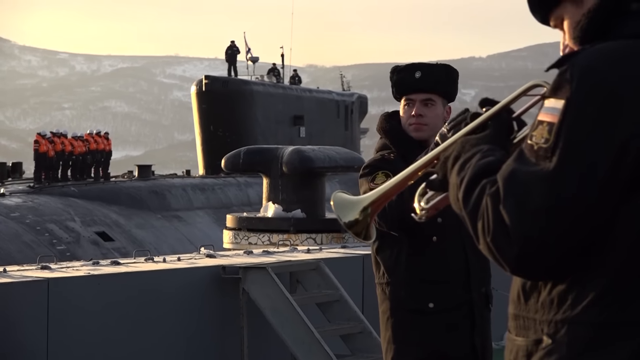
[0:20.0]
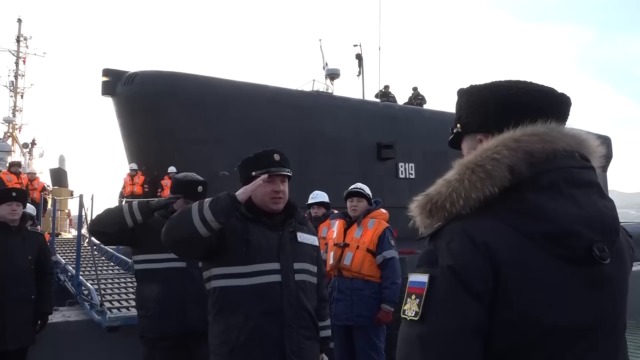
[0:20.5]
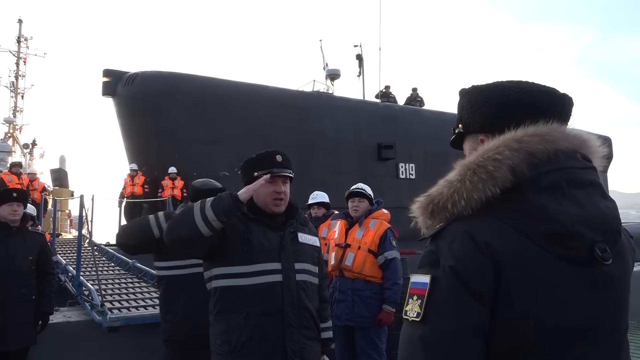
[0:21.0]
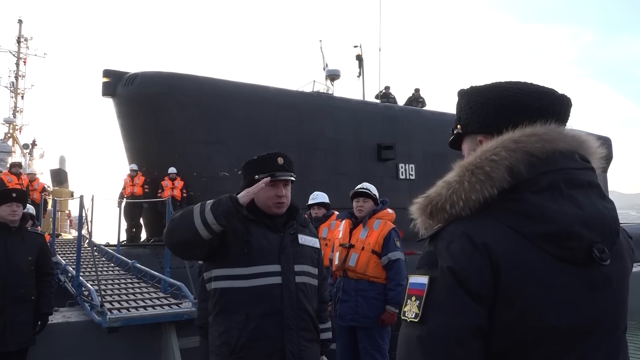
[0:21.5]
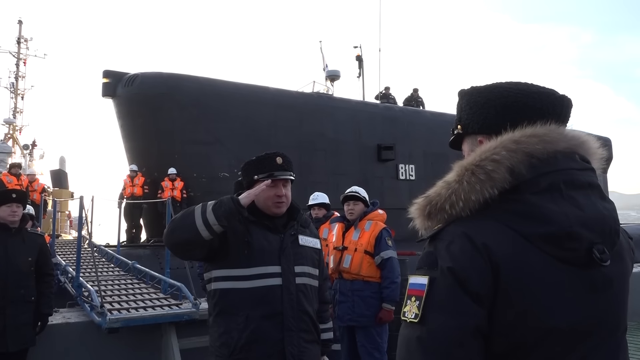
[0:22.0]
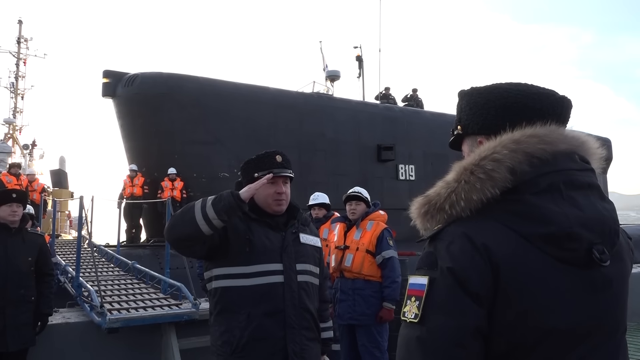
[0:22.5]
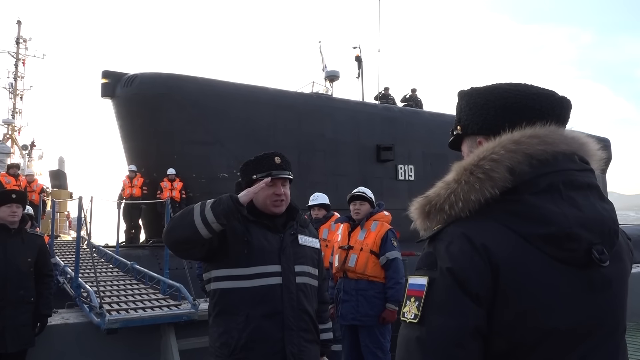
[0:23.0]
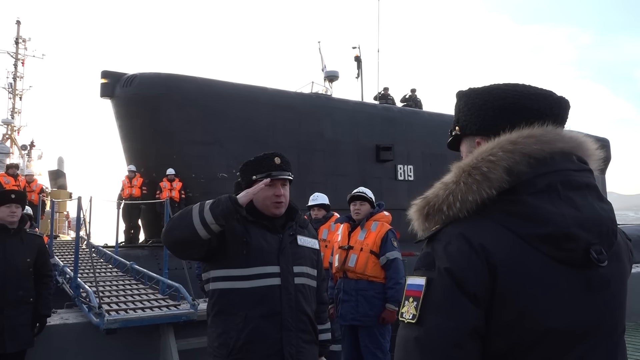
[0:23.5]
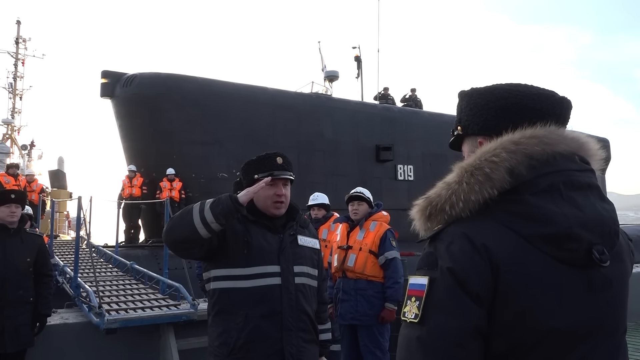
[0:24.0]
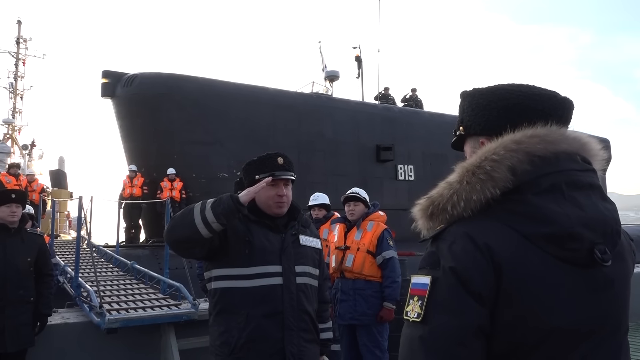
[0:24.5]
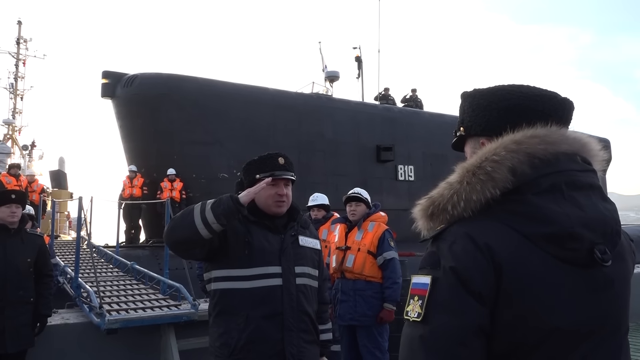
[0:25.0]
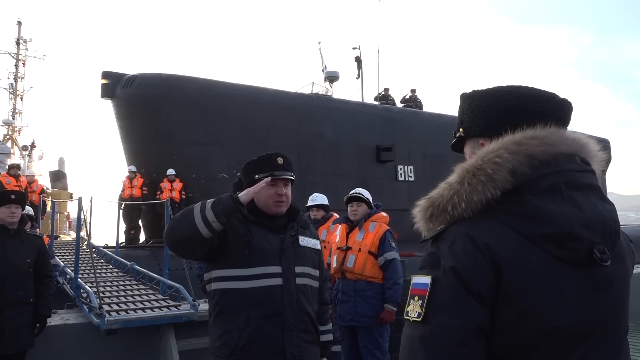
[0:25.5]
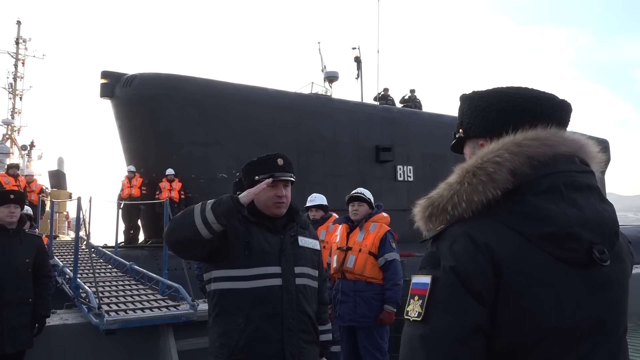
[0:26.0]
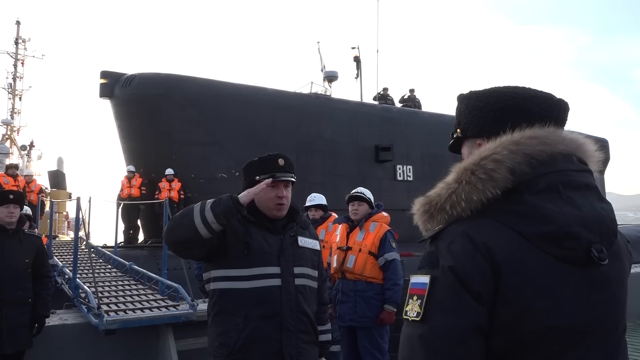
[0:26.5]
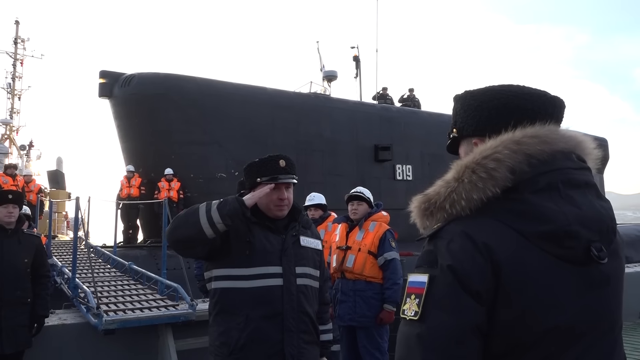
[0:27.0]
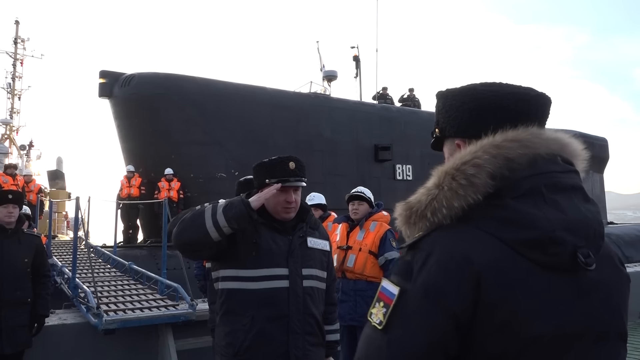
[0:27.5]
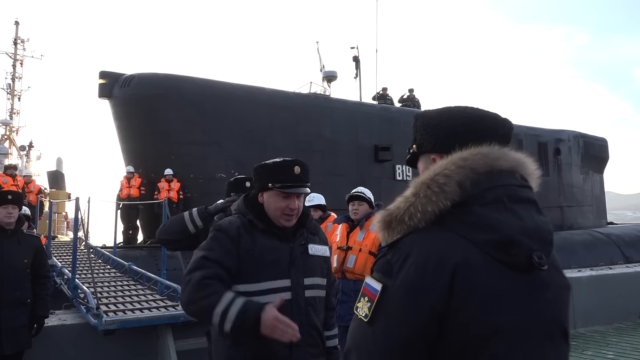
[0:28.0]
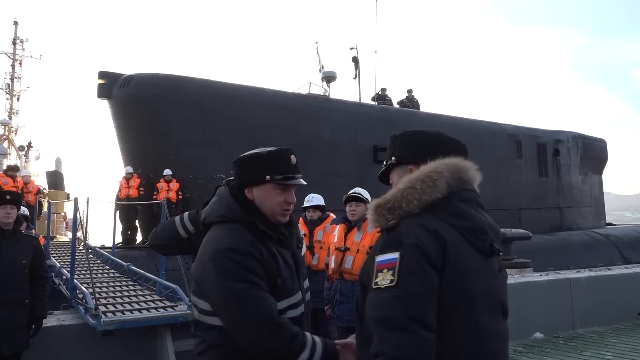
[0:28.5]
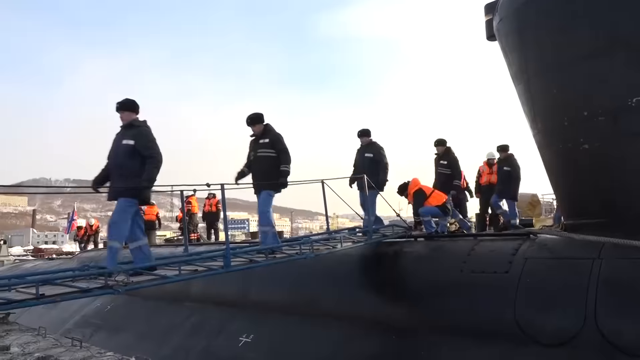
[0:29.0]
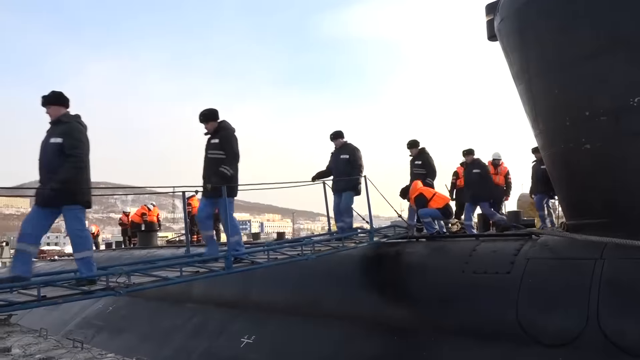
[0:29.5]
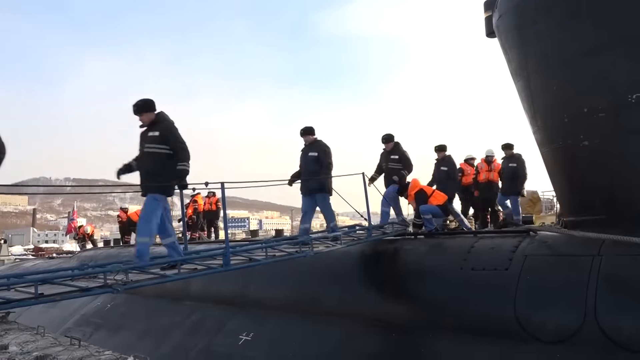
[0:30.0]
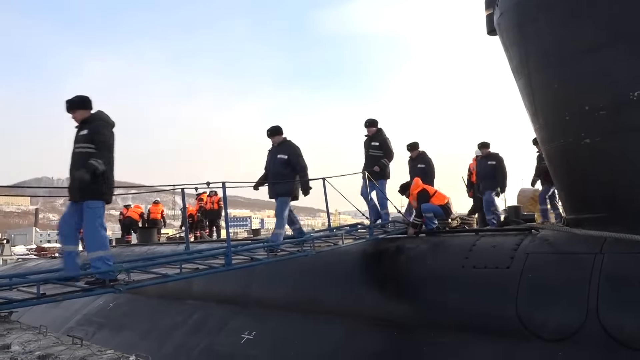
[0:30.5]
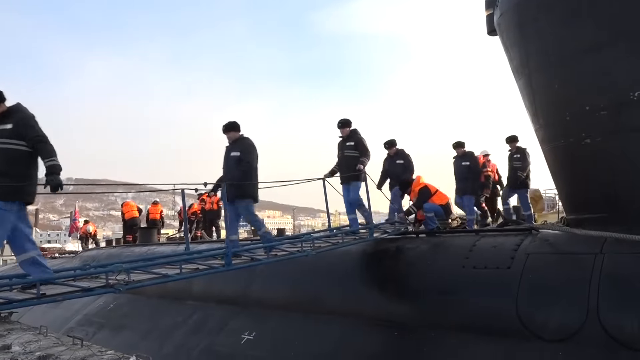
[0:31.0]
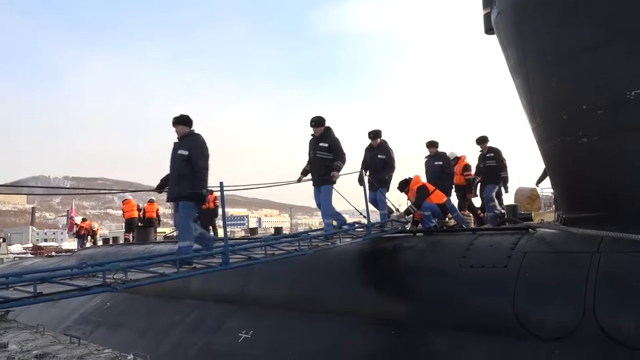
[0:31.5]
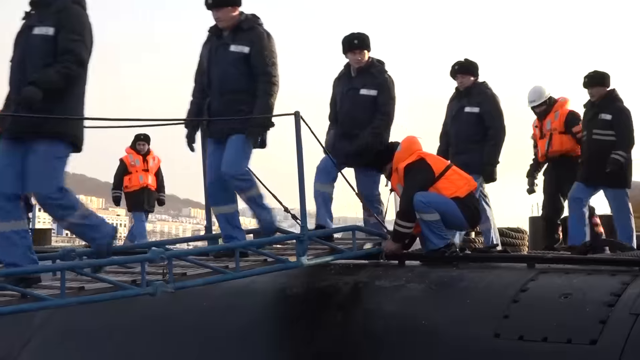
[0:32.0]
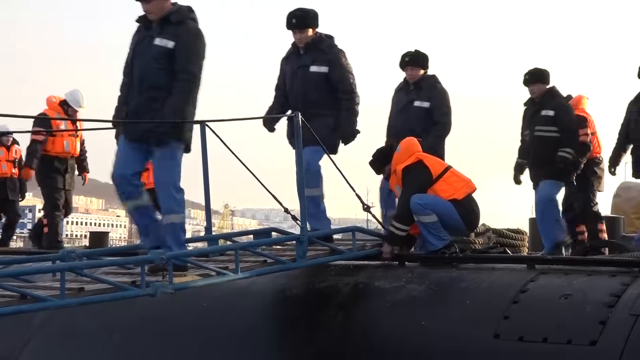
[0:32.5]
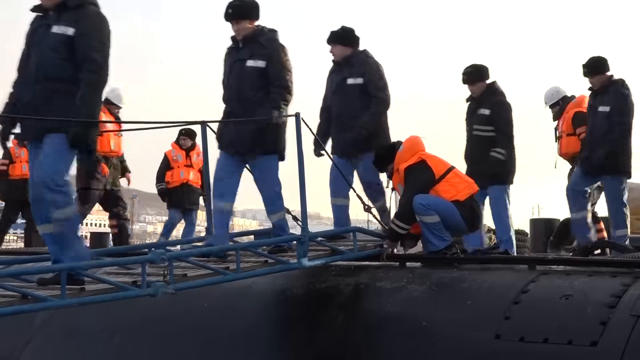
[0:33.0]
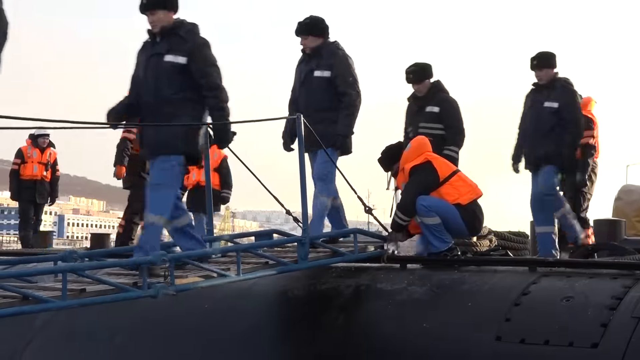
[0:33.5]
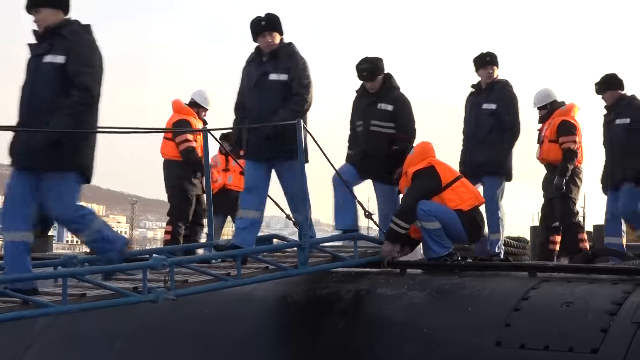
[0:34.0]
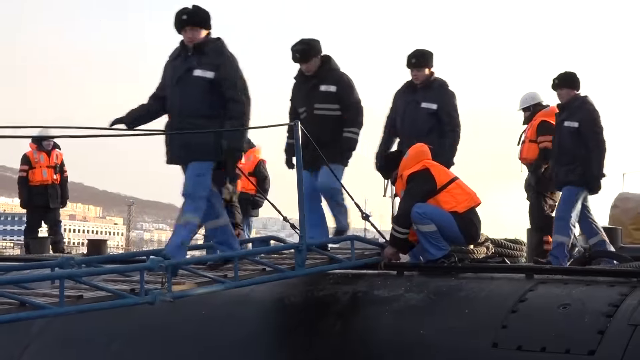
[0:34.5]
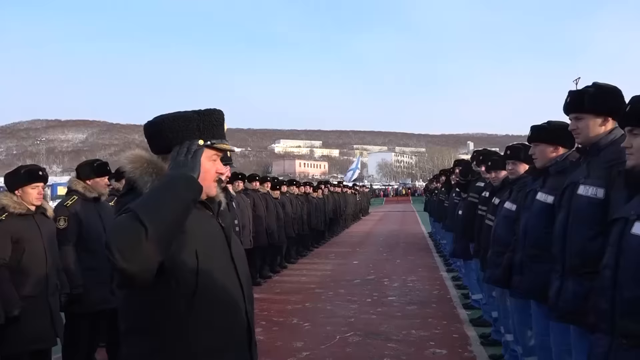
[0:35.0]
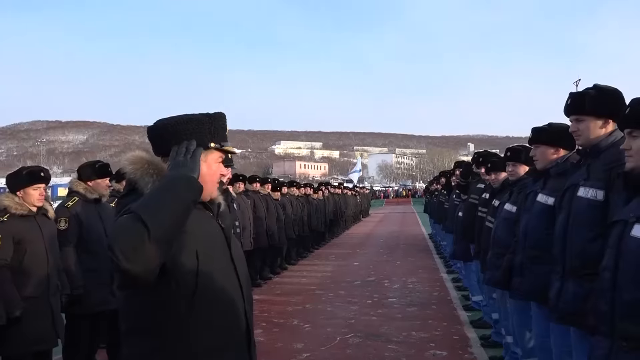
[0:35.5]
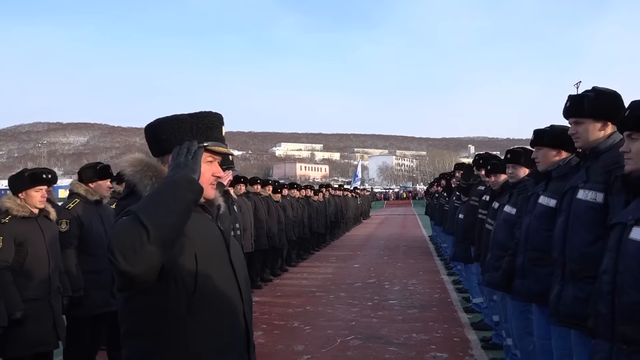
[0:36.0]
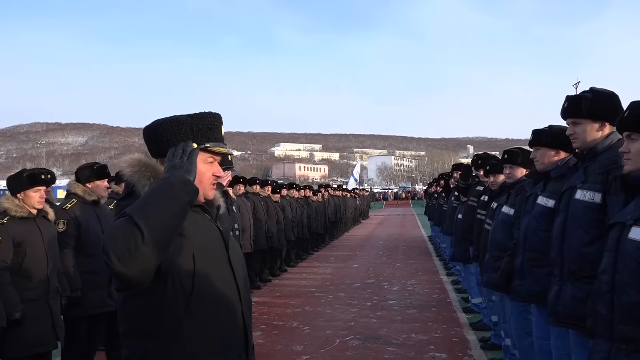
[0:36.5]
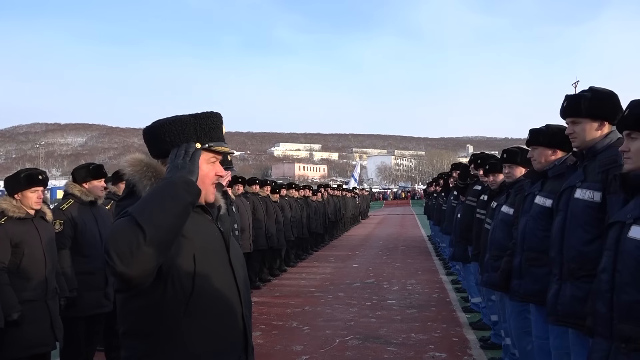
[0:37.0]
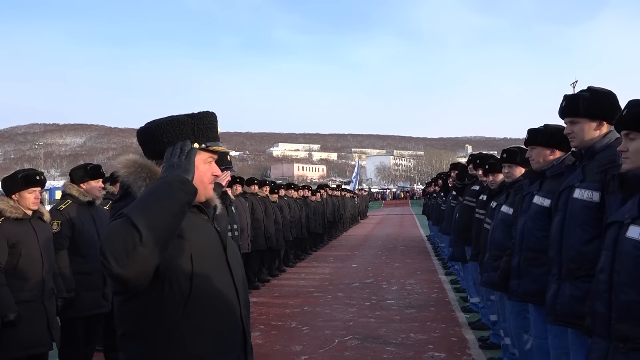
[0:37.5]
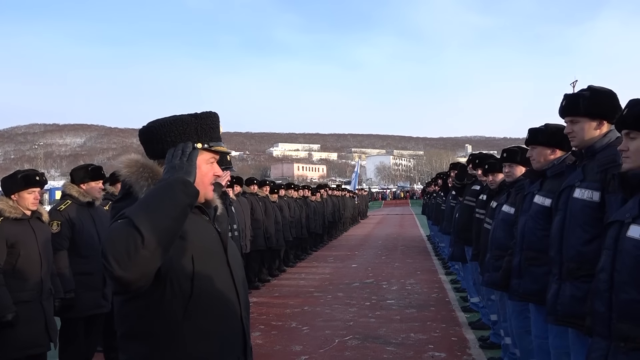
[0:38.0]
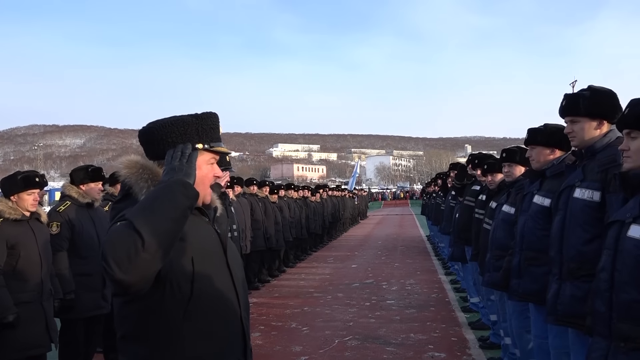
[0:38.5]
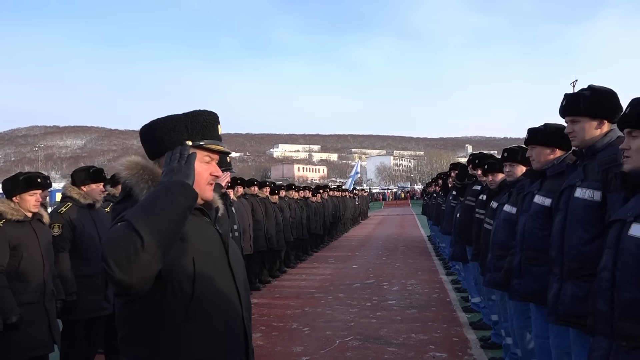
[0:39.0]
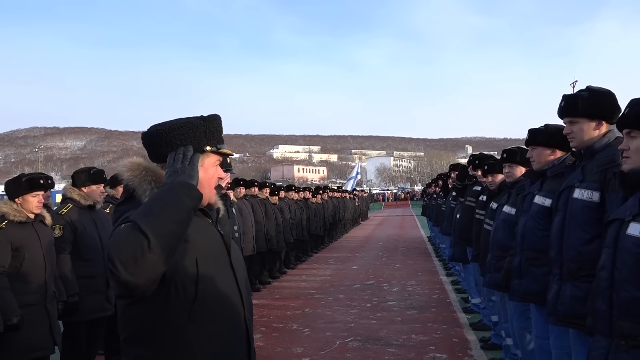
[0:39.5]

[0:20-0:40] Some military men salute what appears to be an officer, who wears a coat with a fur-brimmed collar, while a man stands across from him saluting. There seems to be a ramp leading up to the ship, and what looks like six people stand around wearing orange life vests and white hats as the man salutes the officer and says something. The two then shake hands, and what look like military men walk up the ramp and board the ship. Then military men are shown in formation on either side of a red walkway, apparently hundreds of them, with one standing closest to the camera saluting as he talks. Rows of people are lined up in perfect formation.